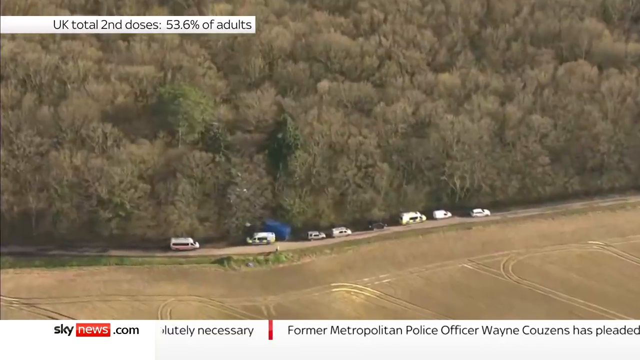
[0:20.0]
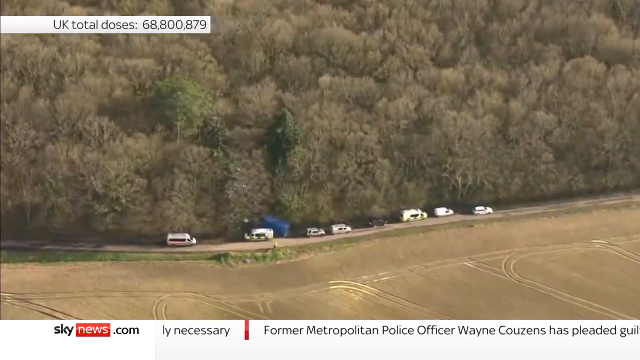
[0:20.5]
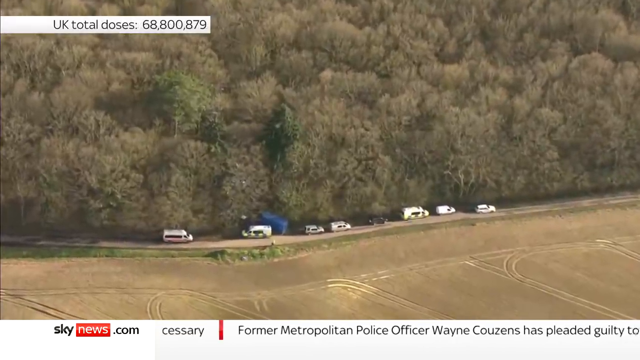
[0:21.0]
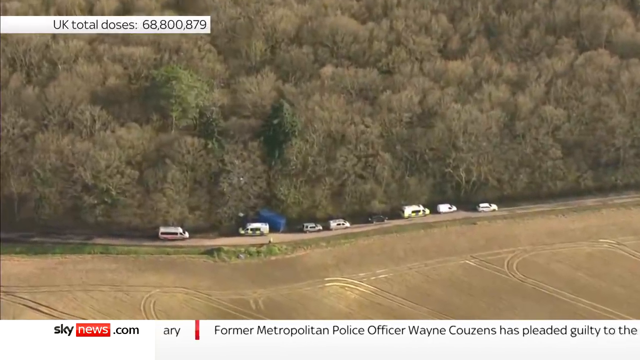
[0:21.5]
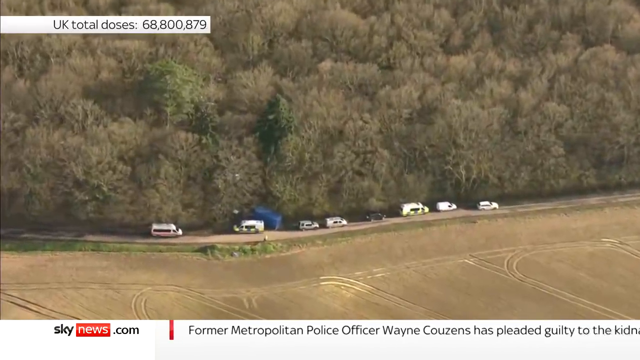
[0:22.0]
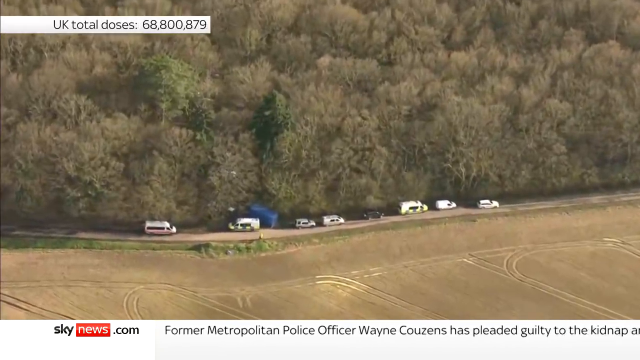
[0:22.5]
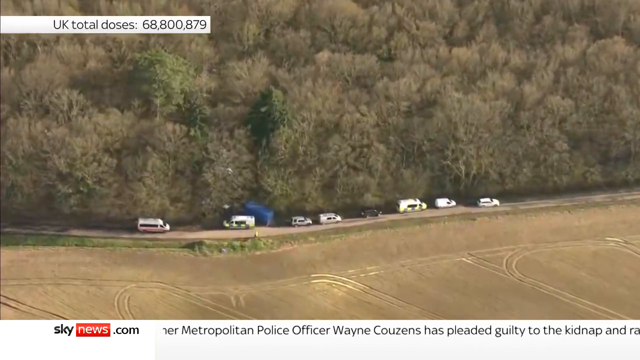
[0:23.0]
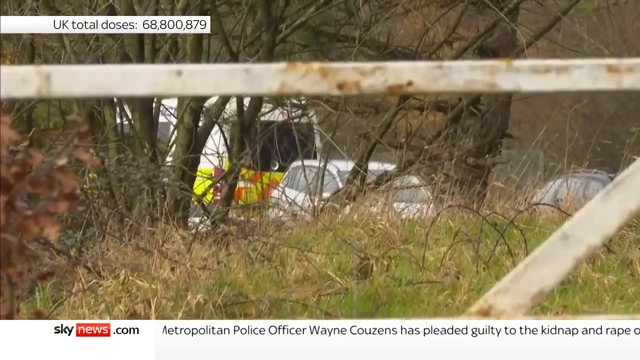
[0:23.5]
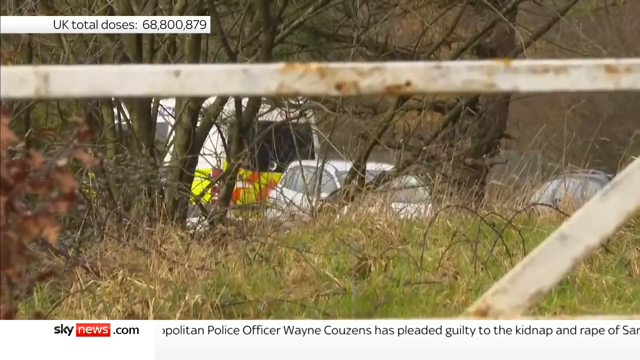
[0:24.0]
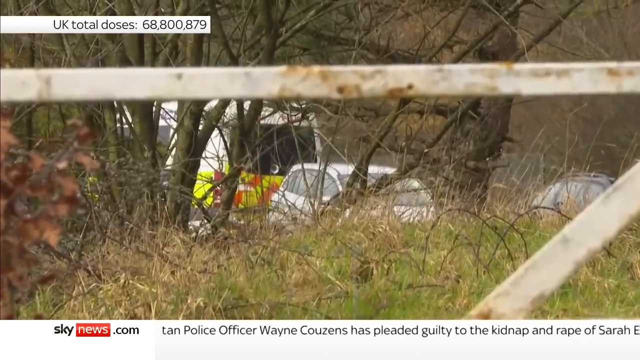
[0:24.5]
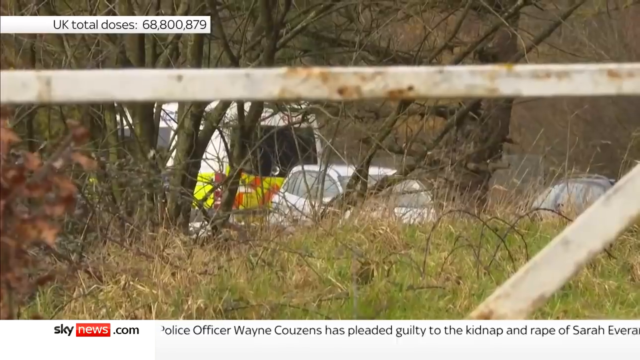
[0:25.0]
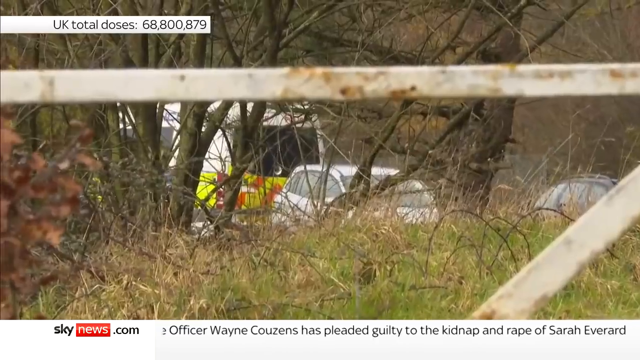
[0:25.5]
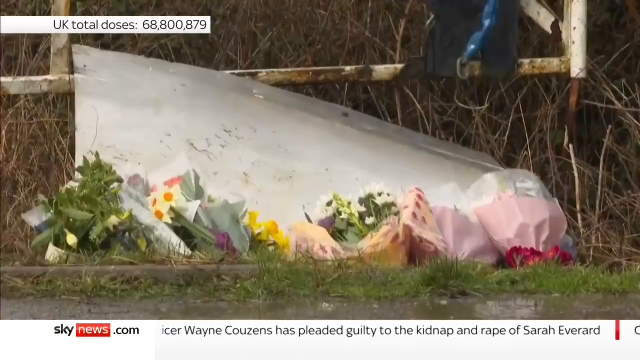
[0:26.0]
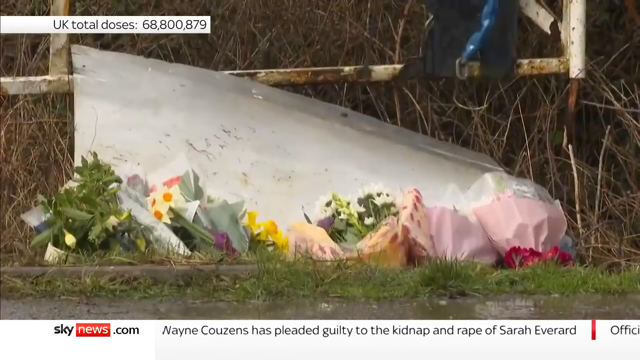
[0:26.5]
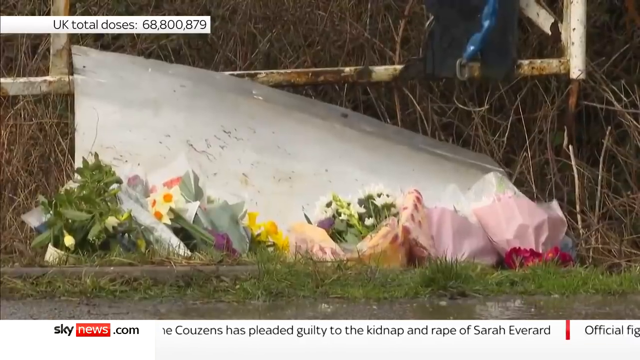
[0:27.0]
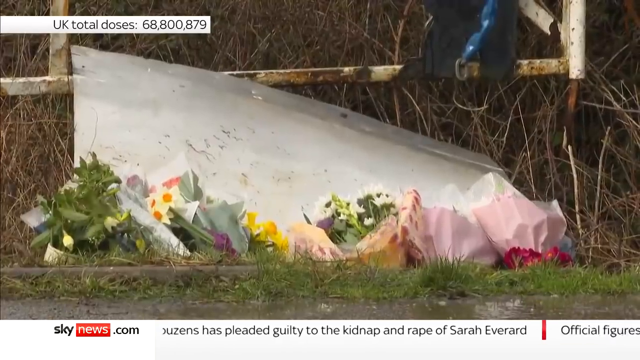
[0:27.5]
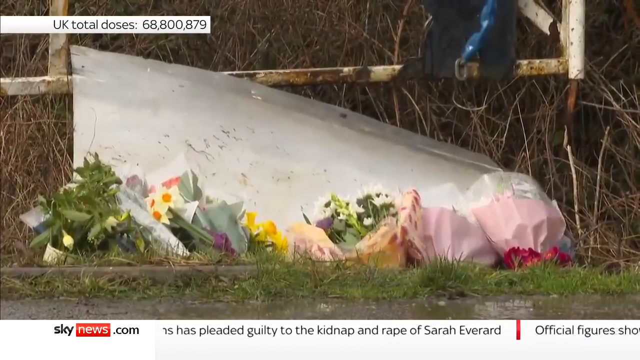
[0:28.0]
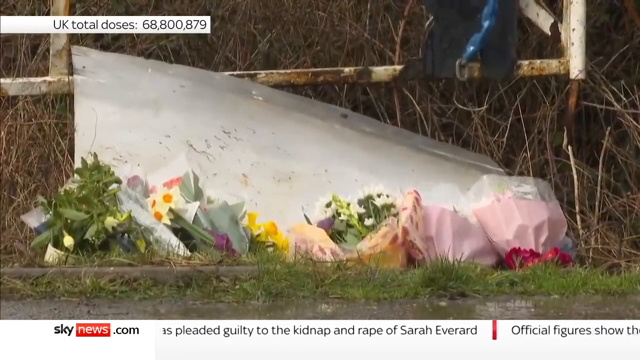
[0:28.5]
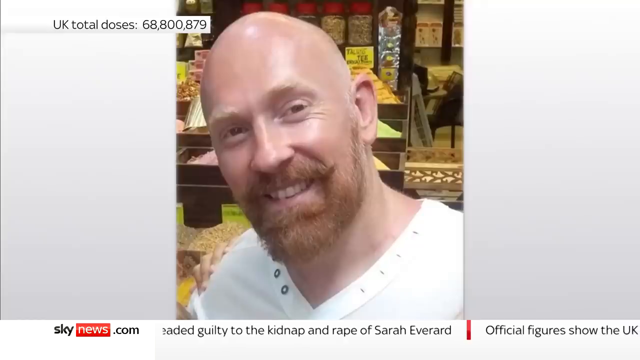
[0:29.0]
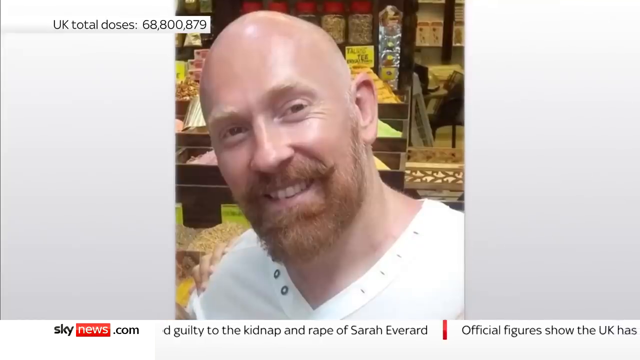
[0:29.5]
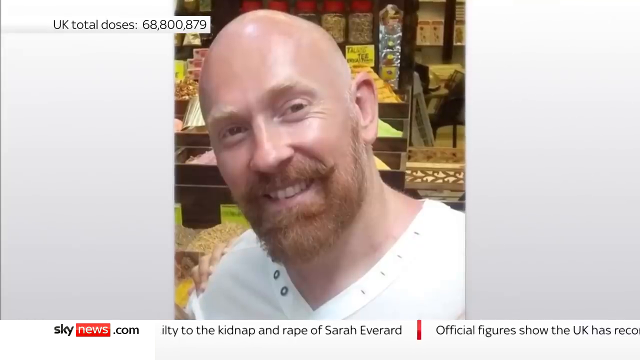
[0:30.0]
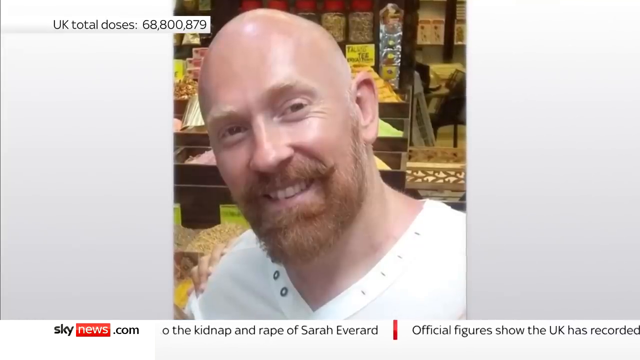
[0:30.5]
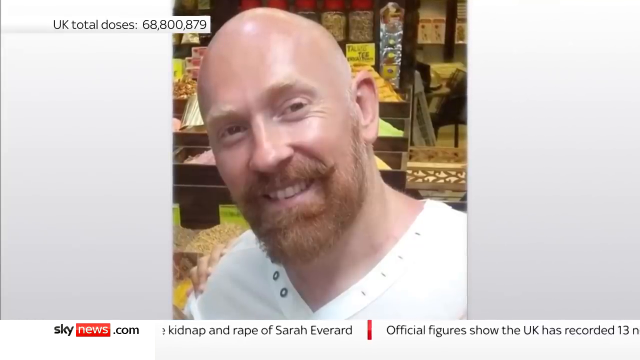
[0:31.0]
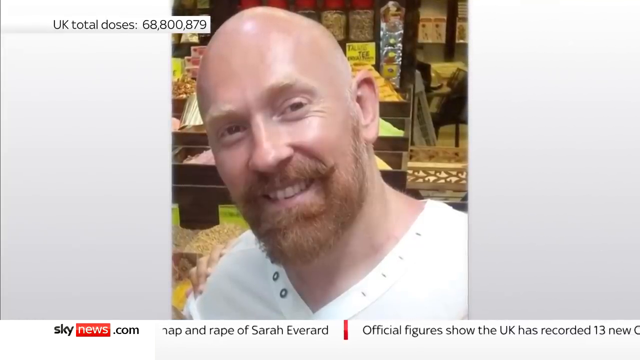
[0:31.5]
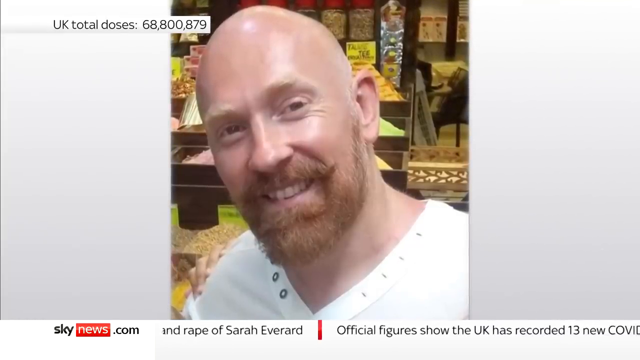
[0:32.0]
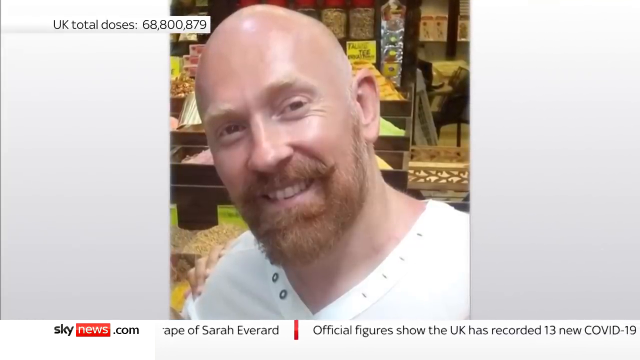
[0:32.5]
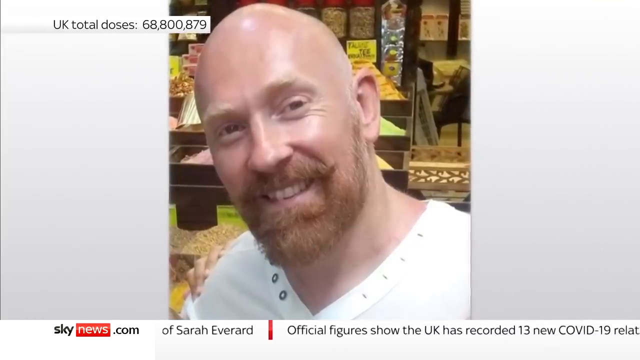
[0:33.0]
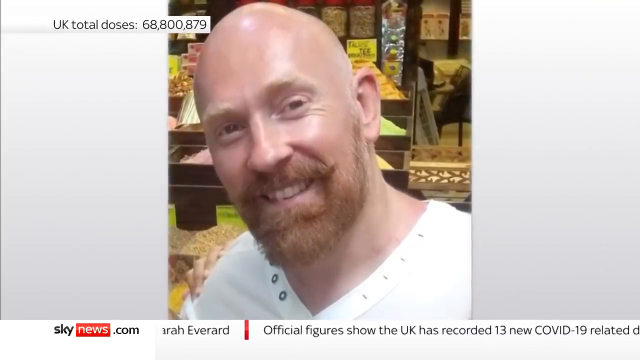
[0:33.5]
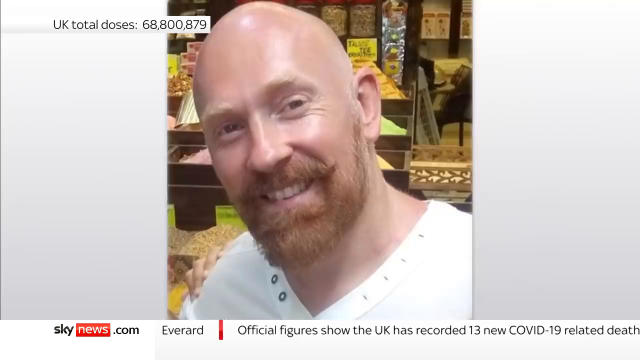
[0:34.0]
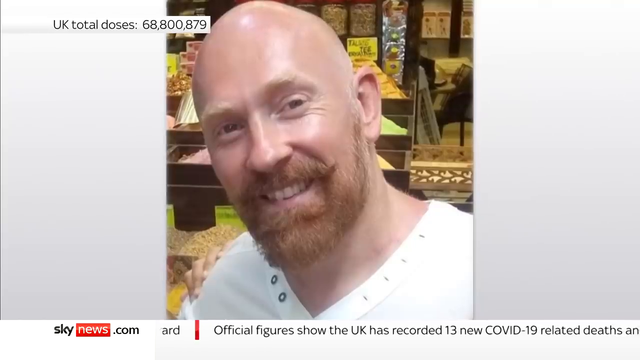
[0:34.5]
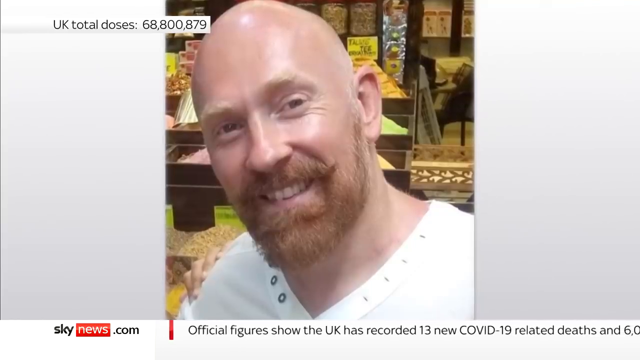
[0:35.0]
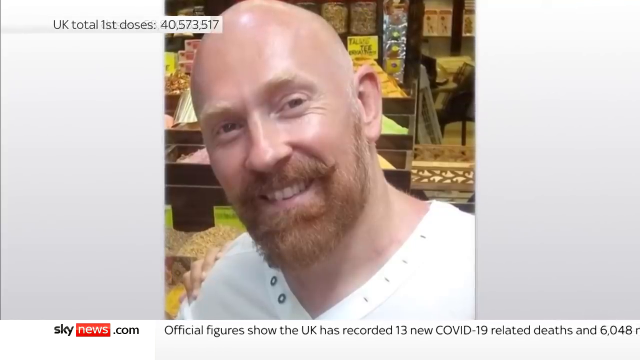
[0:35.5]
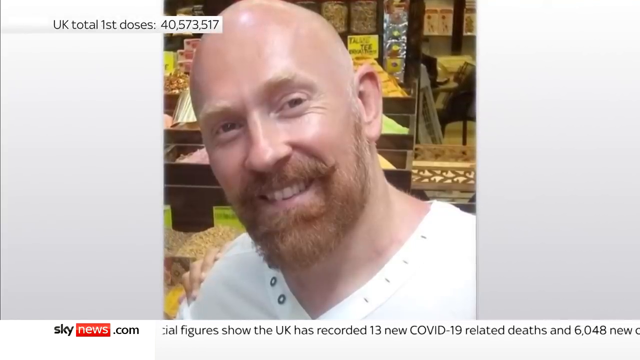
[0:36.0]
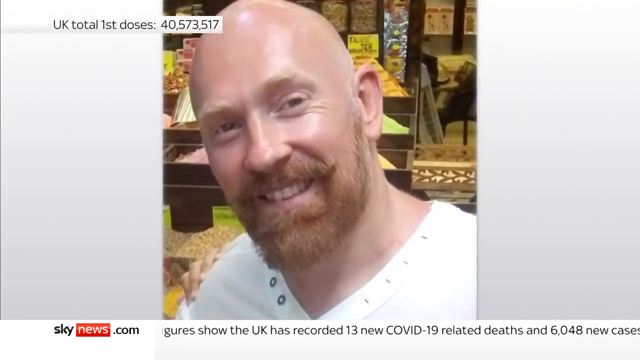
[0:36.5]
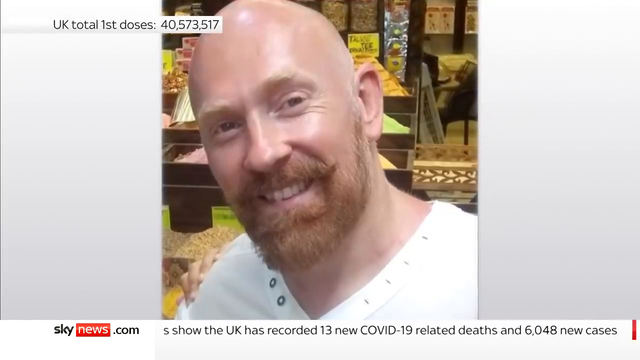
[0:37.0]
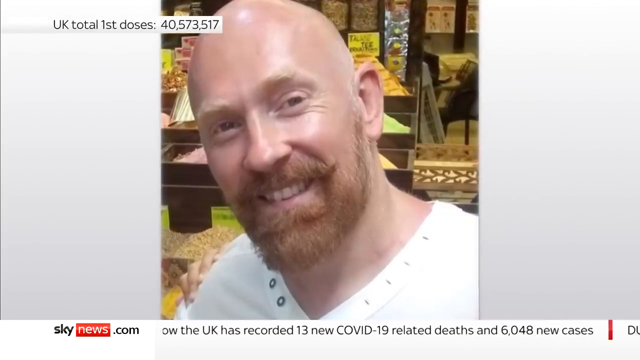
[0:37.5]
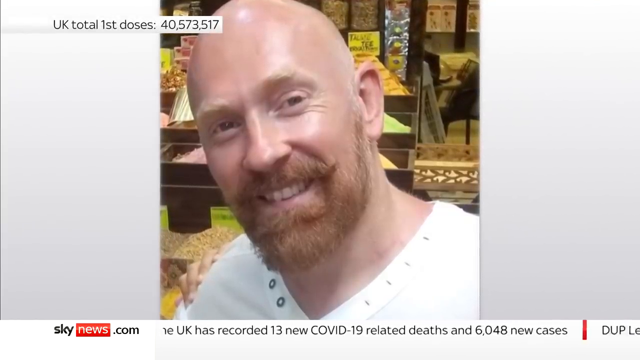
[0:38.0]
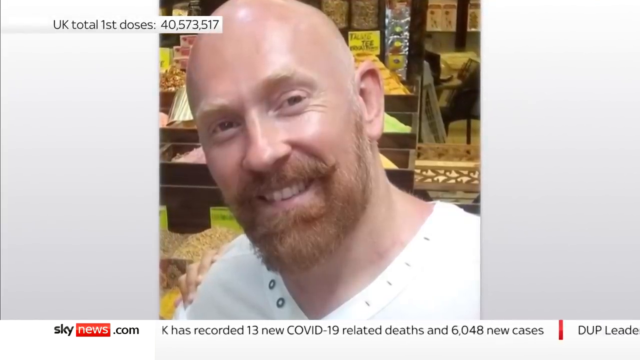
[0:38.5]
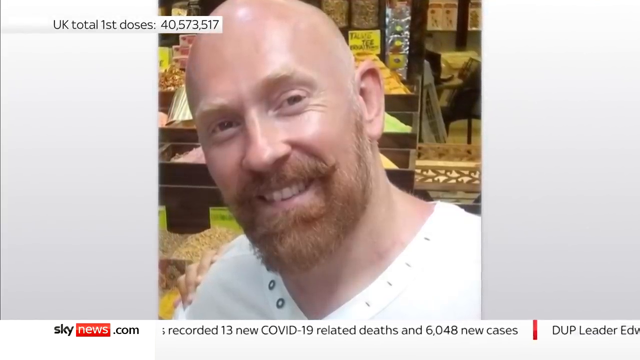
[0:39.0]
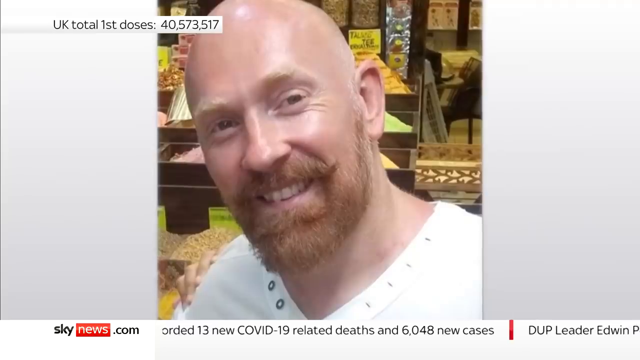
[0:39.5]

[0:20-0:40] The perimeter has about six to seven vehicles on it. A man also seems to be involved: he is bald and has red hair in his beard. There may be more than one person missing, and the search appears to be for both of them. The area looks wide and flat, with a lot of brush along the side. There is a heavily wooded area with a drivable perimeter around it, and seven or eight vehicles in the picture, apparently all posted up.